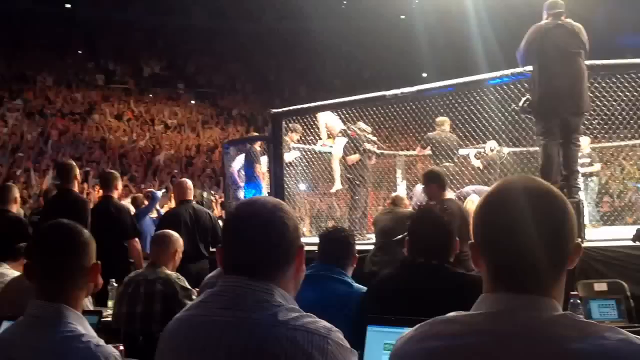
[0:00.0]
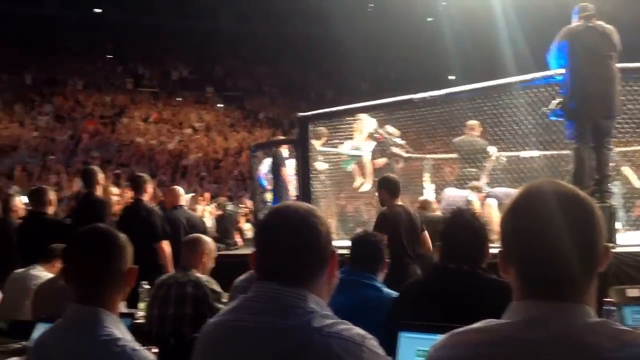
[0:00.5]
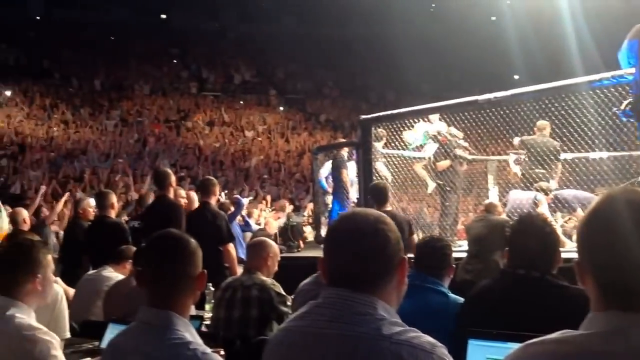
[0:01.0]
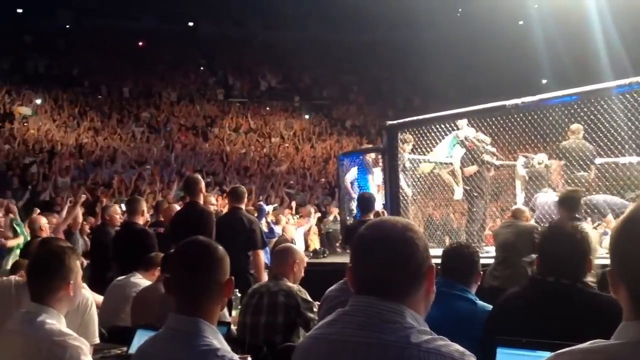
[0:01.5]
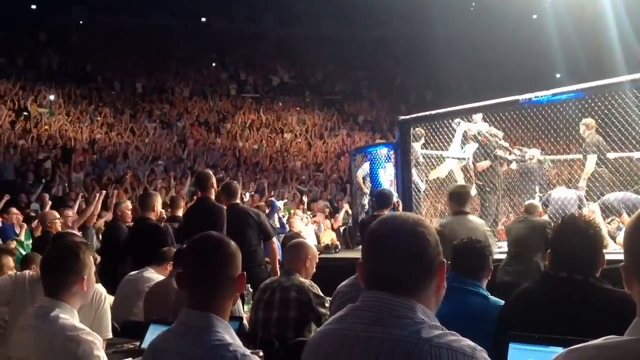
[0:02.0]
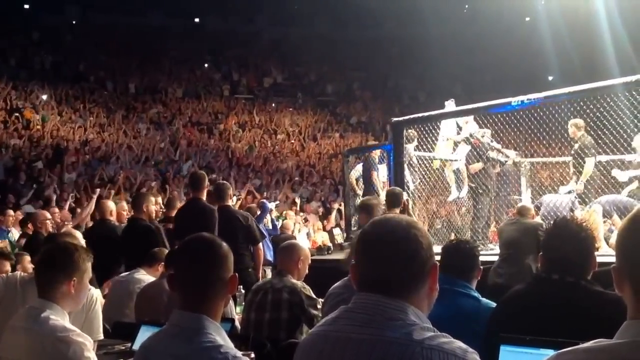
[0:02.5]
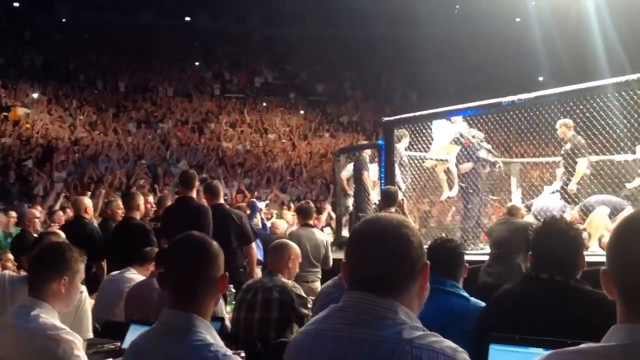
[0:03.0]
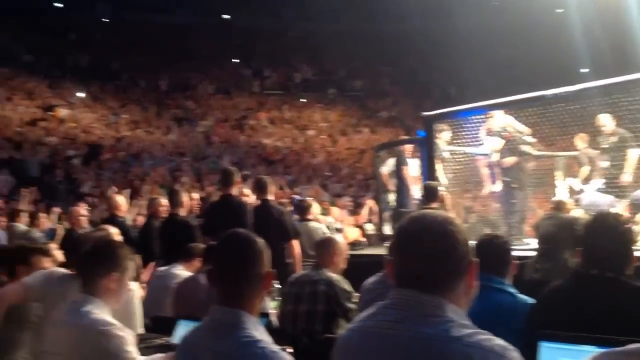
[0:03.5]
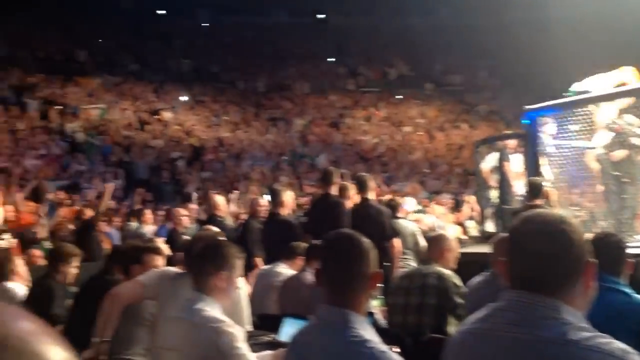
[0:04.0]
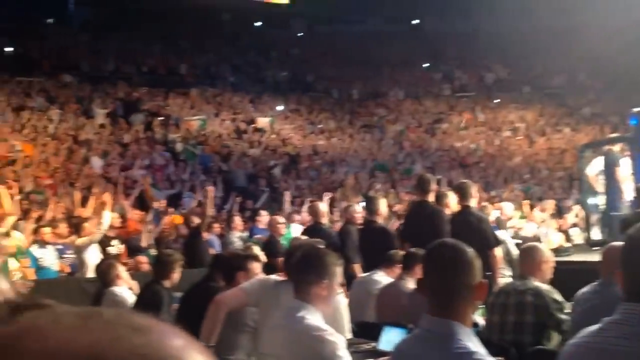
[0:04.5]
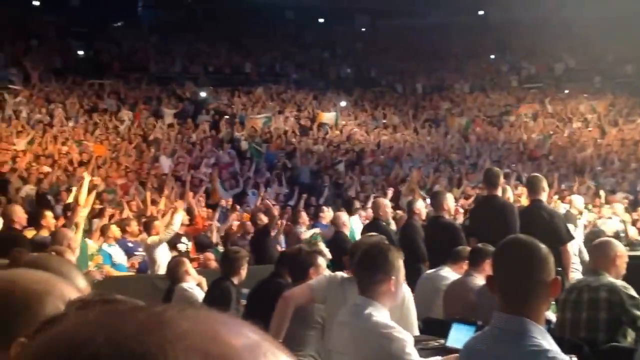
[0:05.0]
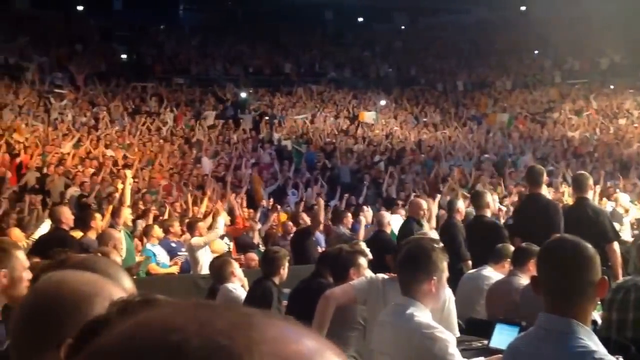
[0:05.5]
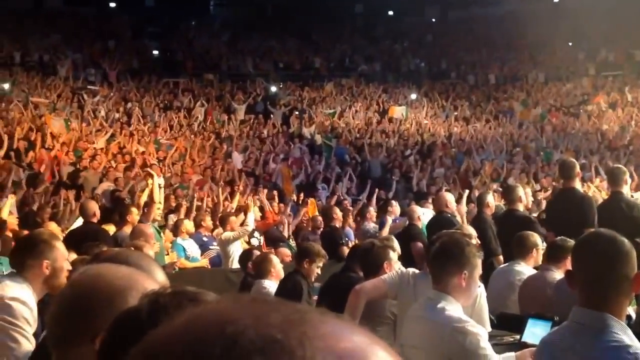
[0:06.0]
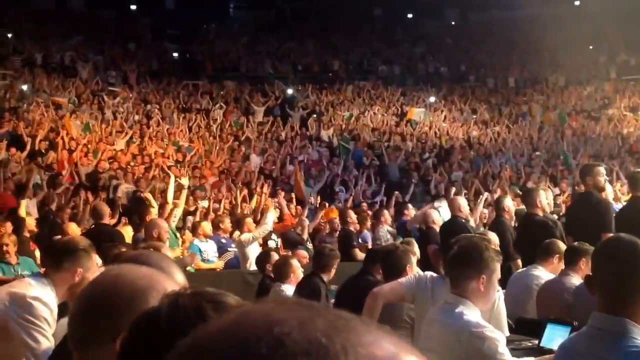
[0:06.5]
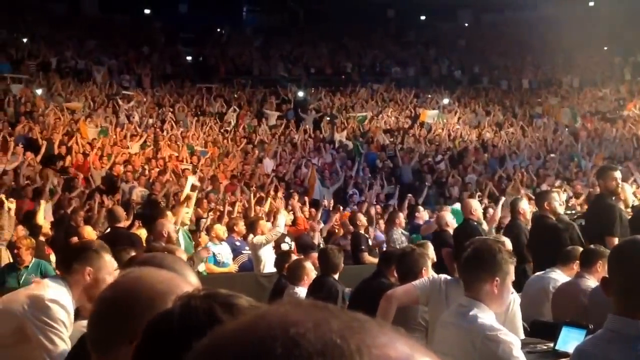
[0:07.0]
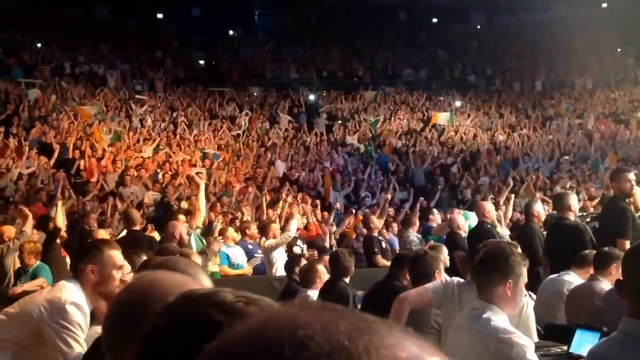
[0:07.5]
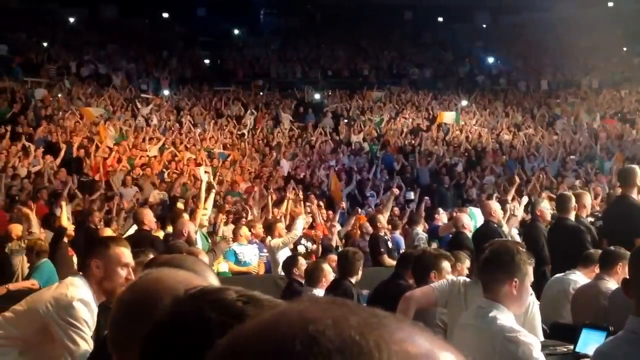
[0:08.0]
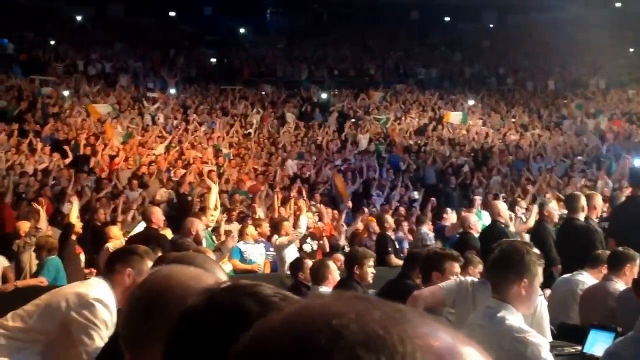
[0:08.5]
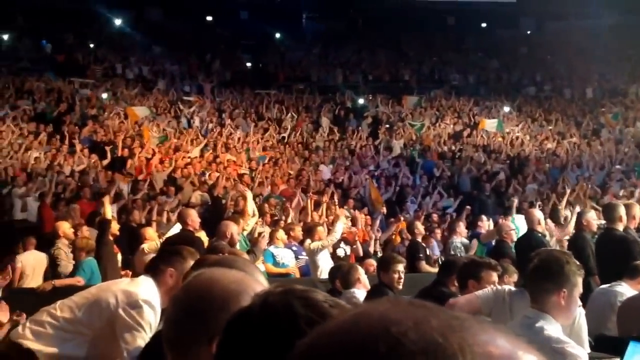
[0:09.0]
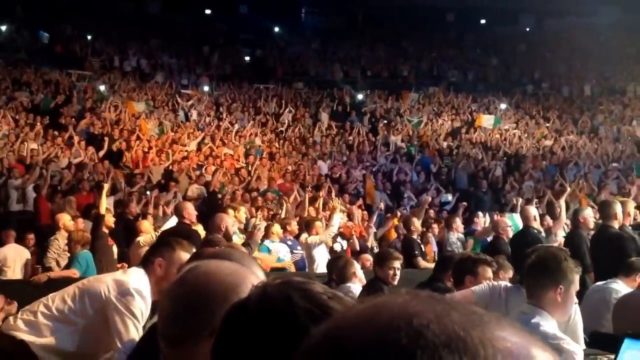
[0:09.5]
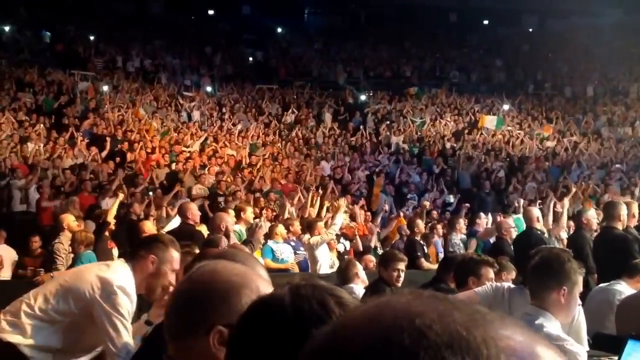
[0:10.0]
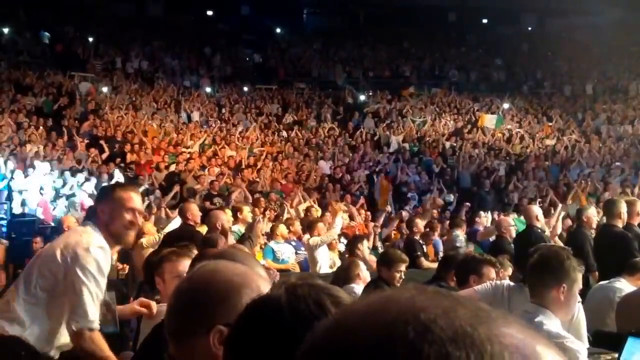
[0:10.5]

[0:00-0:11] A UFC cage match. The crowd is going crazy, raising their hands. Apparently the person who was competing has just finished; this person is straddling the top of the fence. The camera pans out into the audience, where everybody has their hands raised and is going wild. The competitor's identity and opponent are not shown.